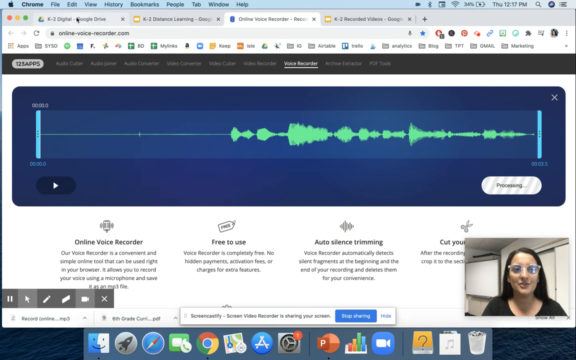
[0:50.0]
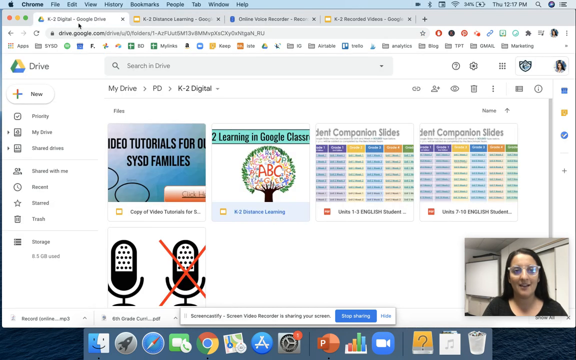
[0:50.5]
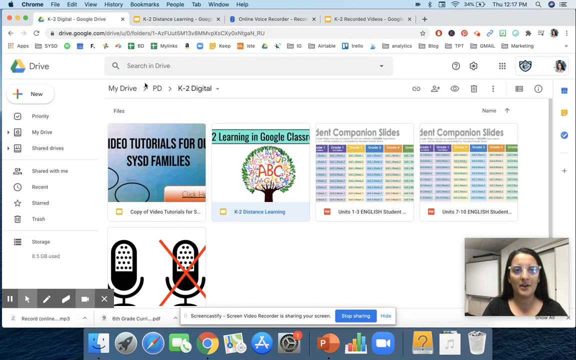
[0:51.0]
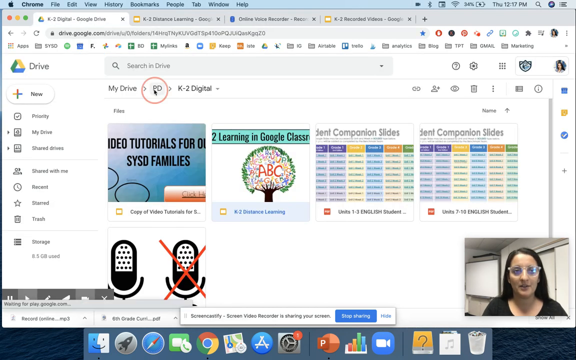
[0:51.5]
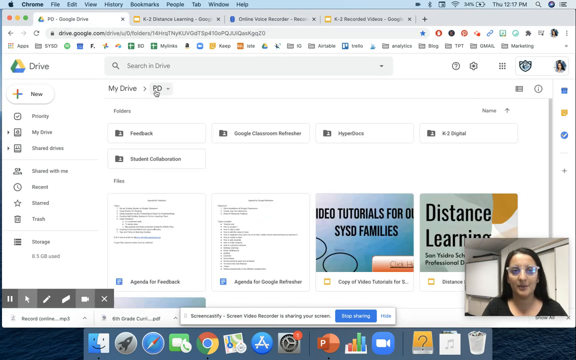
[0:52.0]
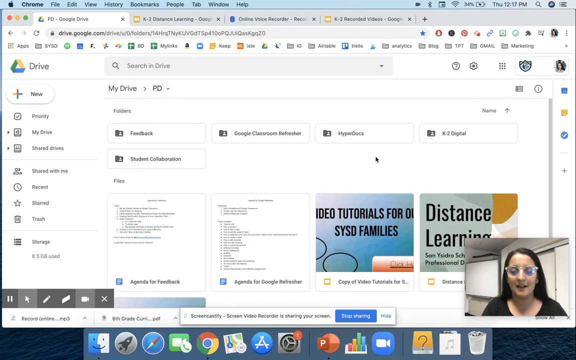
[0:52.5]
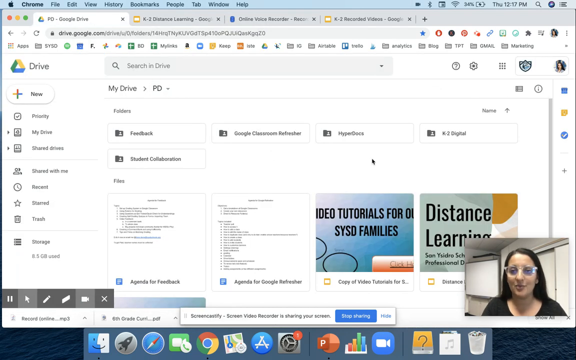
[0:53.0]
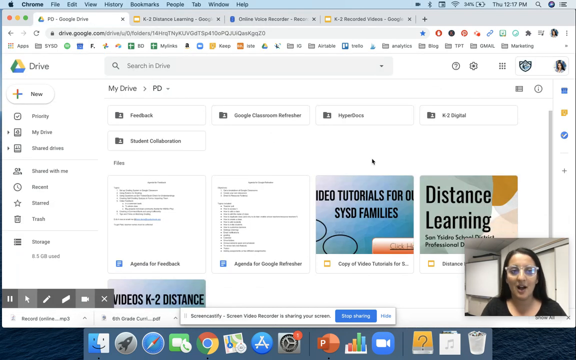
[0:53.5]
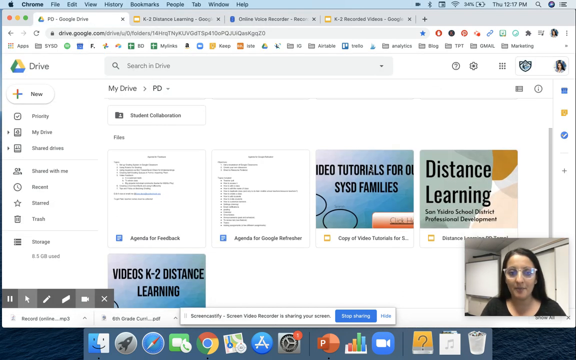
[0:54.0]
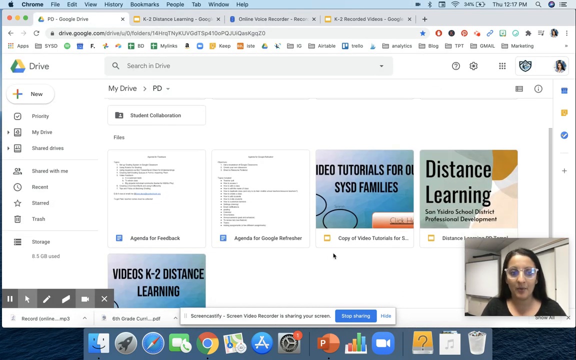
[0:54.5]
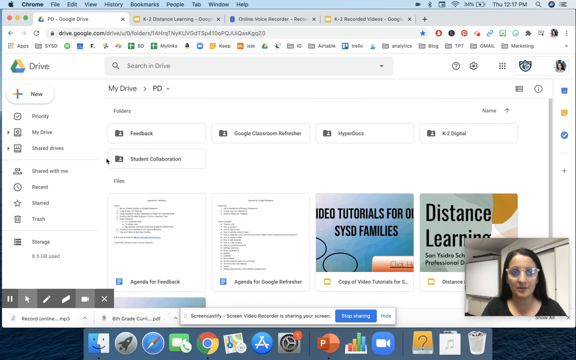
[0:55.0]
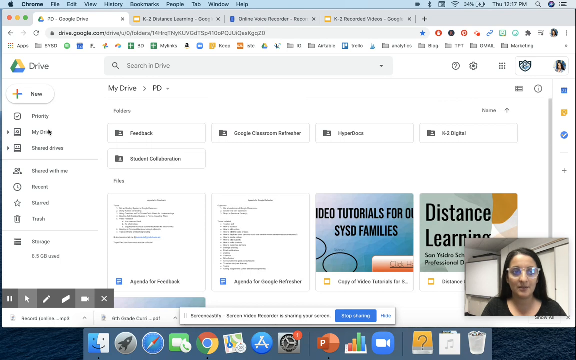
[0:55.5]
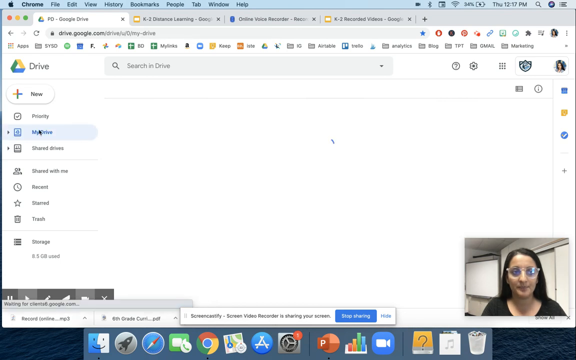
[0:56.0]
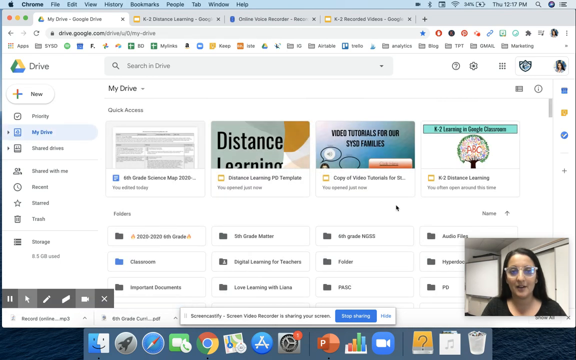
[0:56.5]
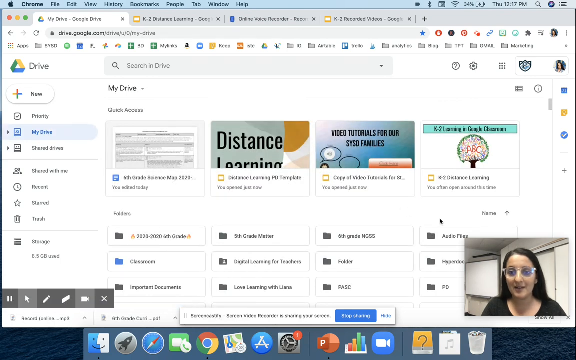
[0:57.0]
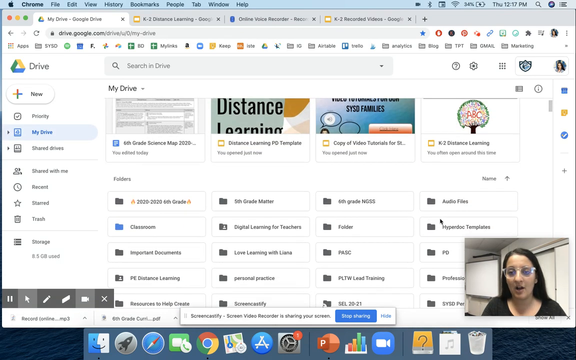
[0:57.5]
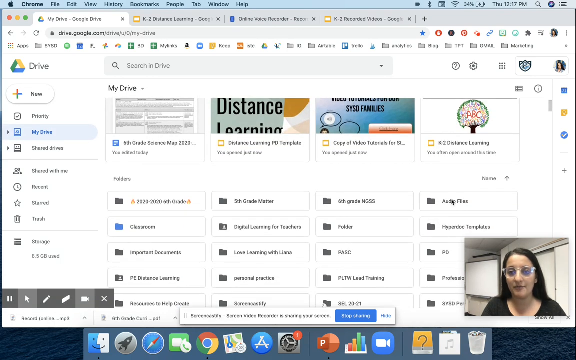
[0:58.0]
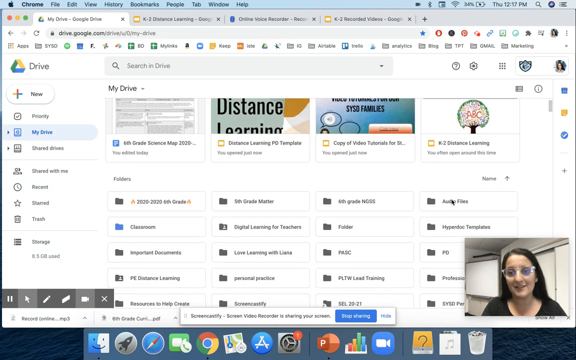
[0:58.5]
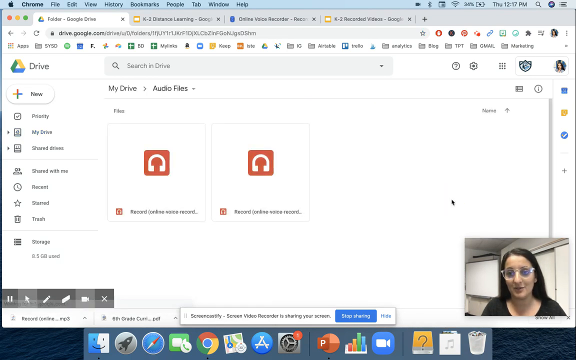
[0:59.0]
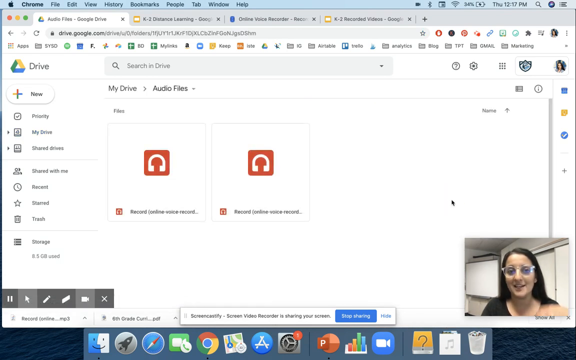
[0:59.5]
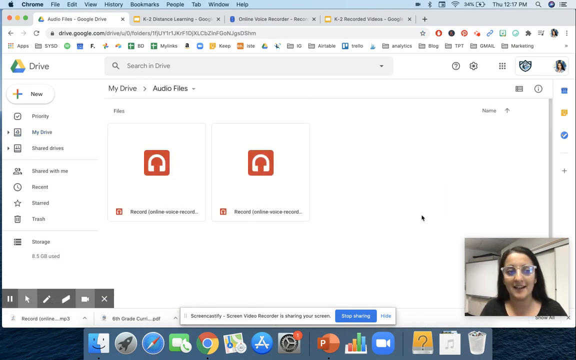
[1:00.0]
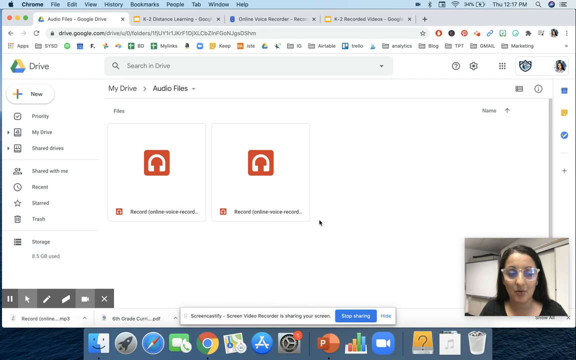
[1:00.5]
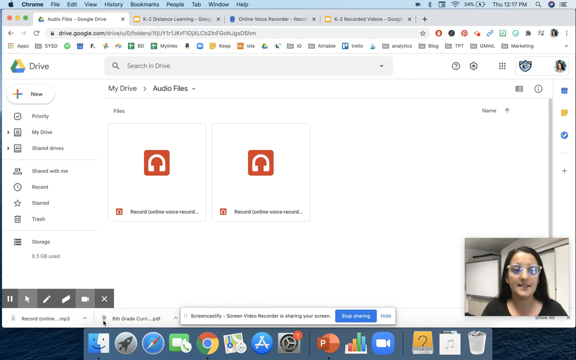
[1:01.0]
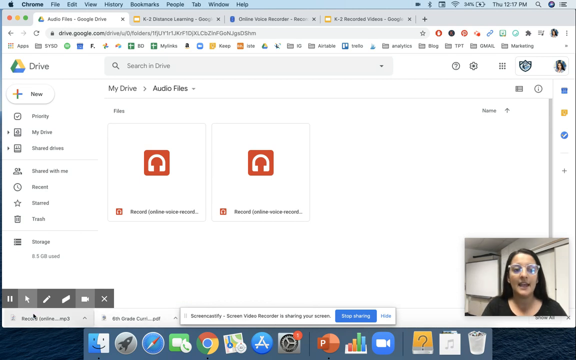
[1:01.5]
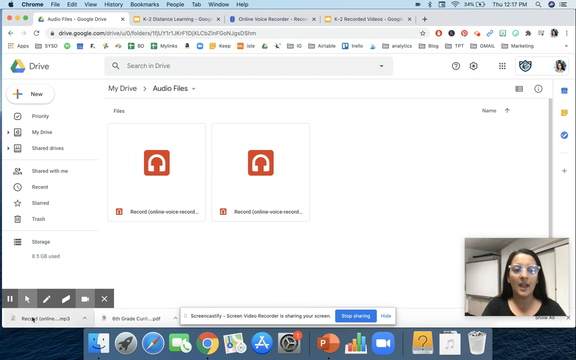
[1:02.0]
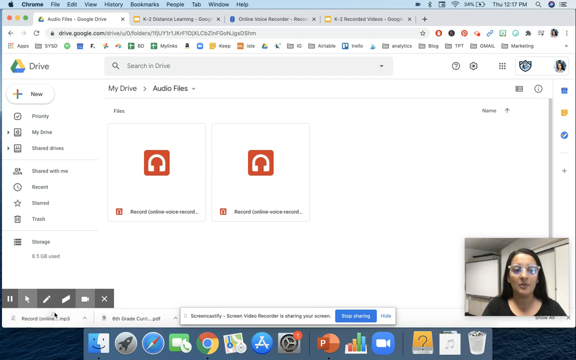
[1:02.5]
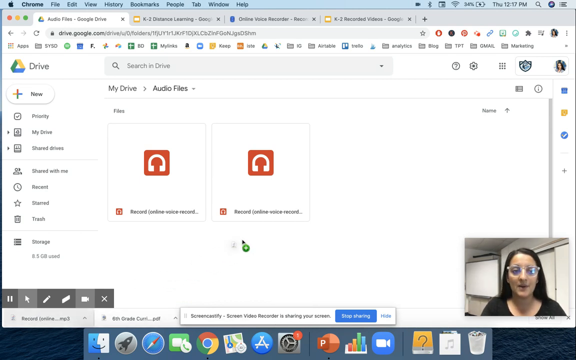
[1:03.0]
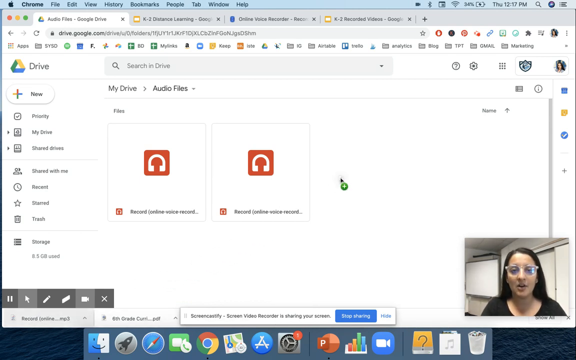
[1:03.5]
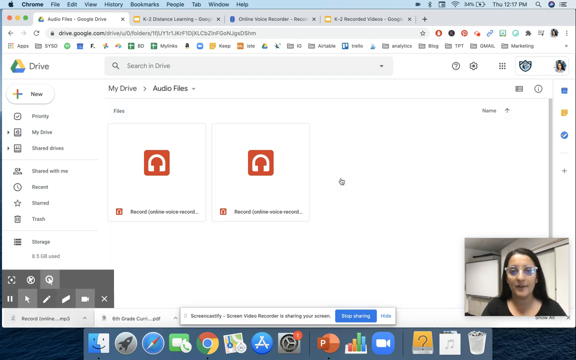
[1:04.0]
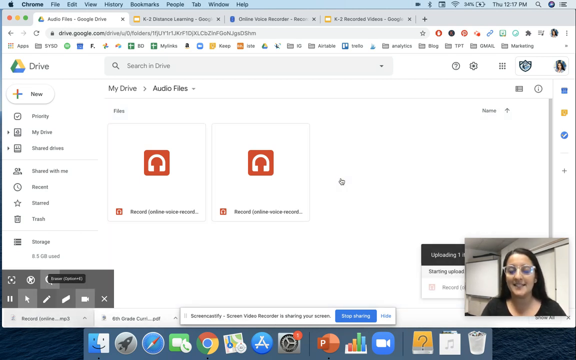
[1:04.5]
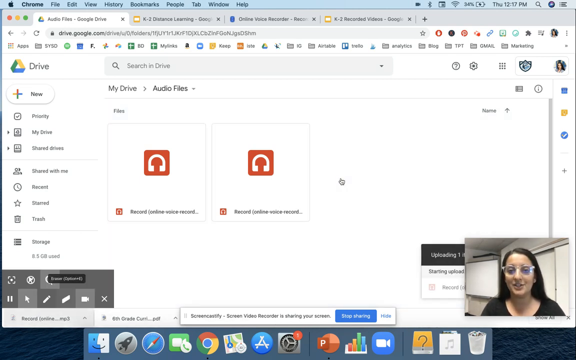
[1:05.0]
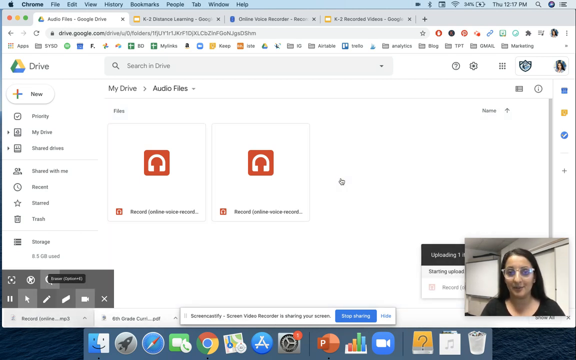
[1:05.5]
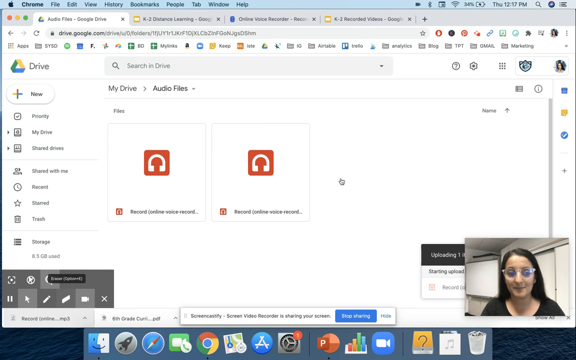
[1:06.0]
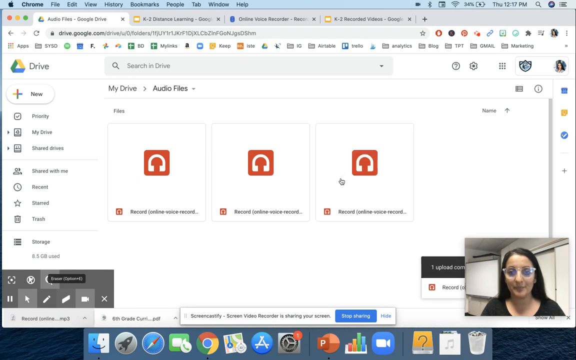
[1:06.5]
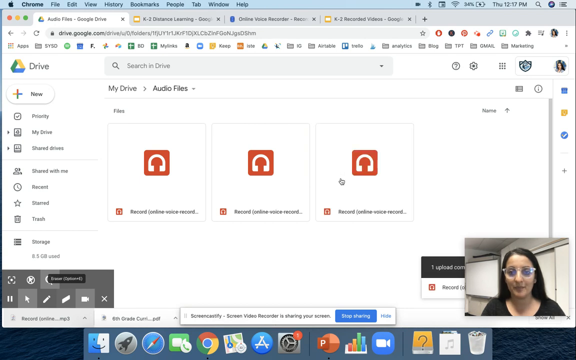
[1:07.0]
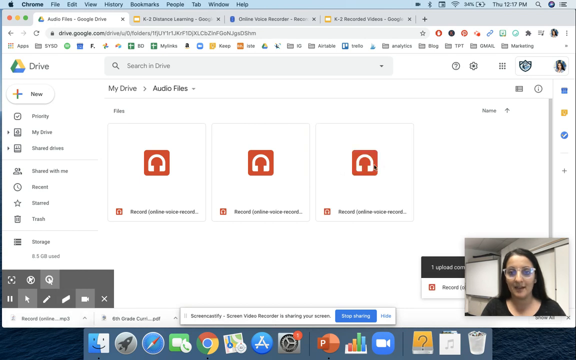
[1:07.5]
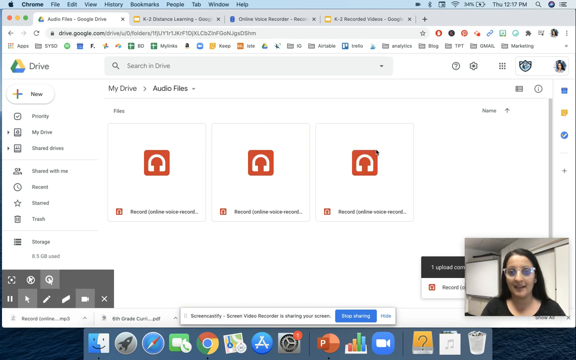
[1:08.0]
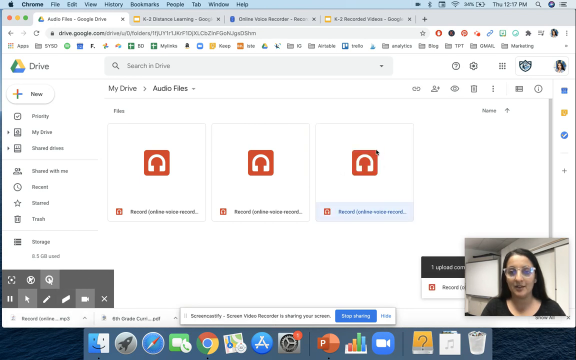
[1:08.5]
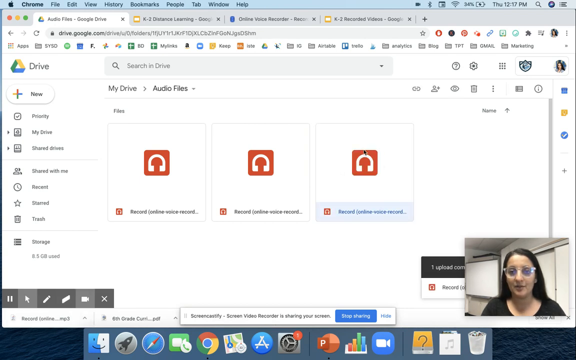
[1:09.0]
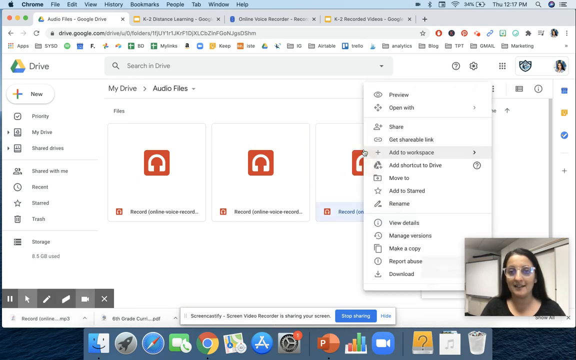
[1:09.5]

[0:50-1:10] The teacher is apparently showing how to capture an audio clip, using an example audio clip with green audio bars on a blue background and a "processing" button to the bottom right of it. After processing is done, she navigates to a different window within Google Drive on the shared screen, then to another window within Google Drive, then to the sidebar under My Drive, and clicks into a folder called "Audio Files." There she selects an audio file and adds it to the Google Drive. The woman talking and teaching is the main subject; she looks to be in her mid to late 20s, wears clear glasses and a black shirt, and has long dark hair. Her stream appears in a minimized screen in the lower right-hand corner.